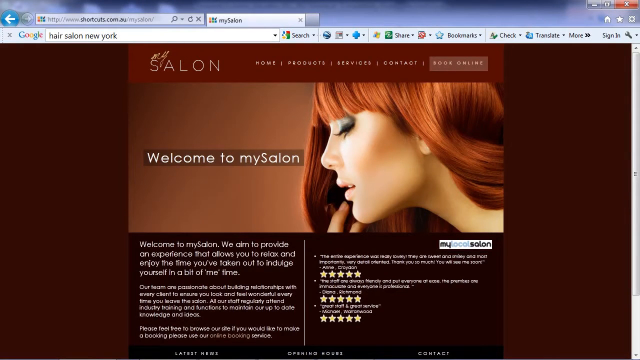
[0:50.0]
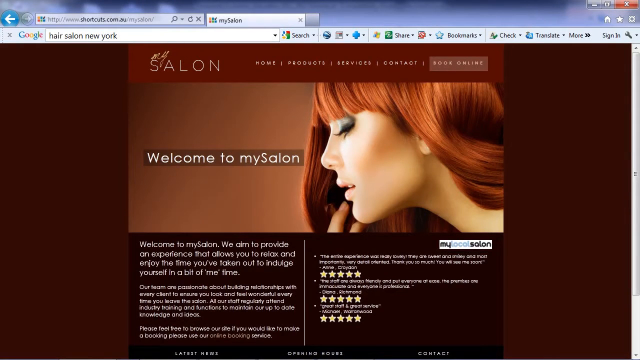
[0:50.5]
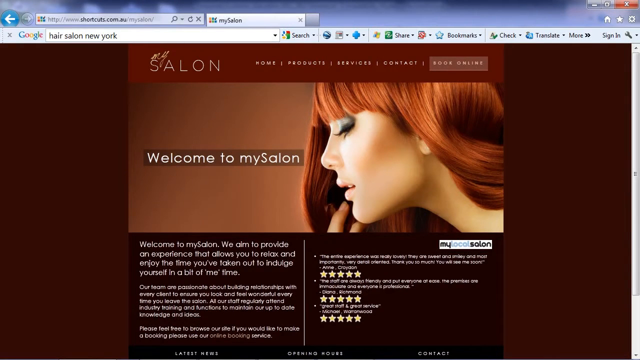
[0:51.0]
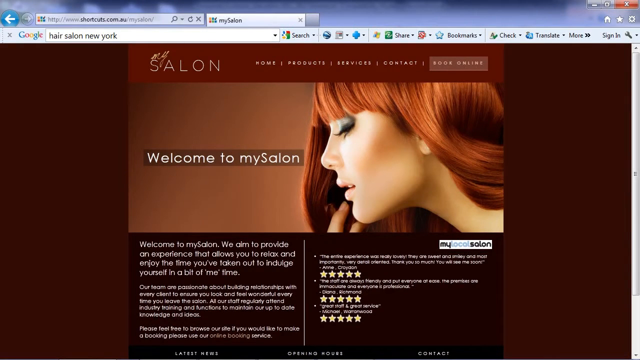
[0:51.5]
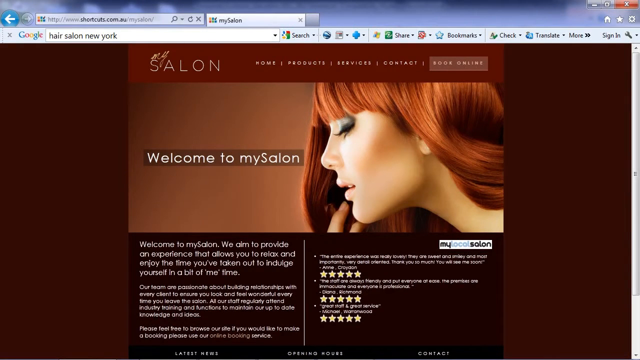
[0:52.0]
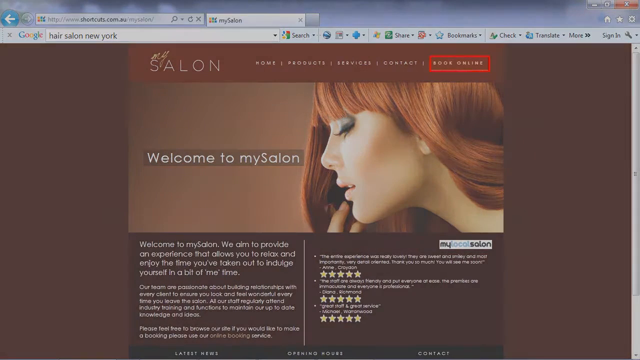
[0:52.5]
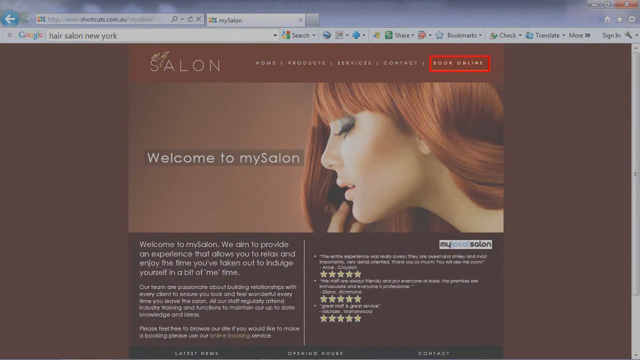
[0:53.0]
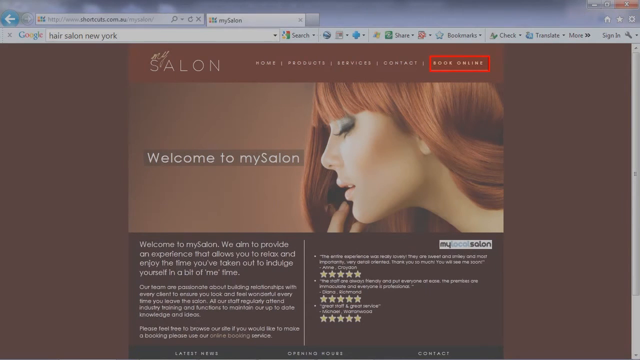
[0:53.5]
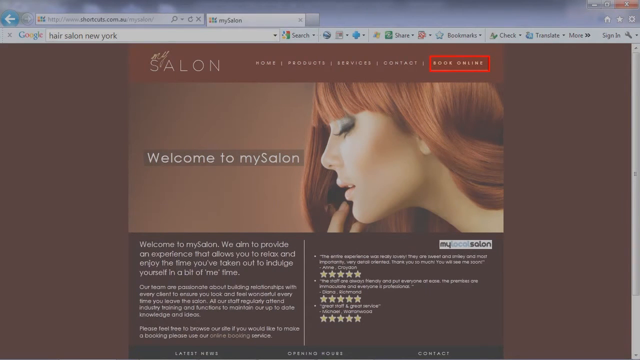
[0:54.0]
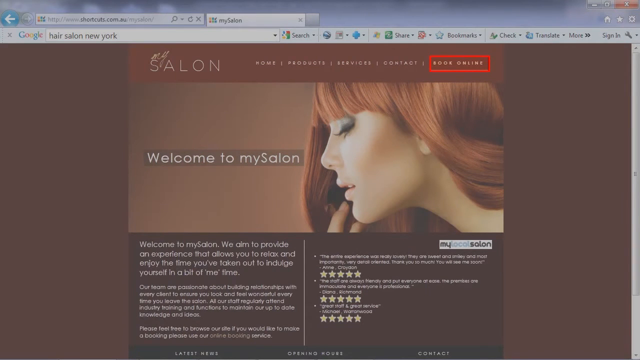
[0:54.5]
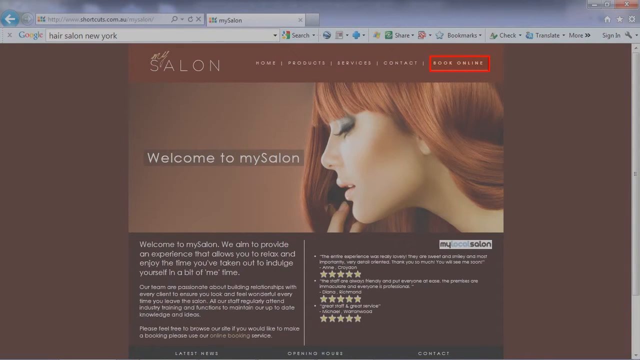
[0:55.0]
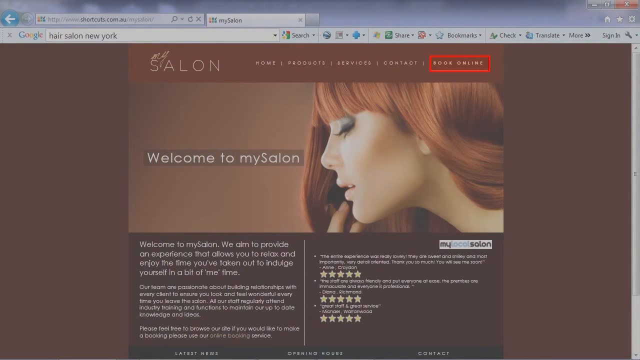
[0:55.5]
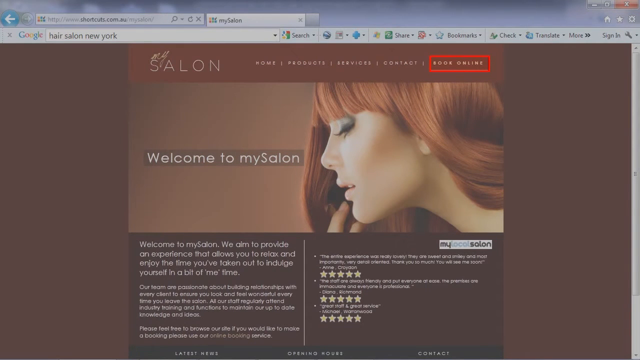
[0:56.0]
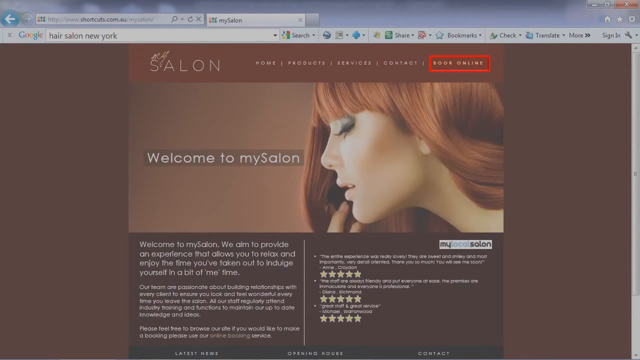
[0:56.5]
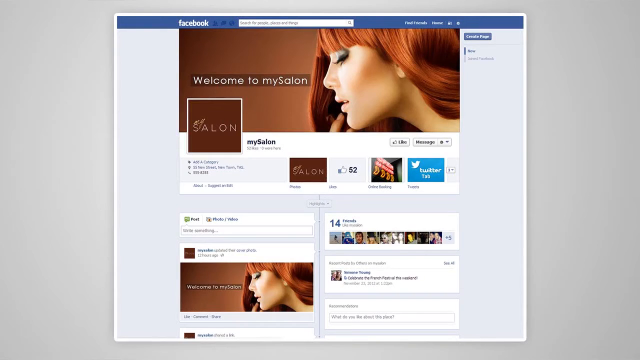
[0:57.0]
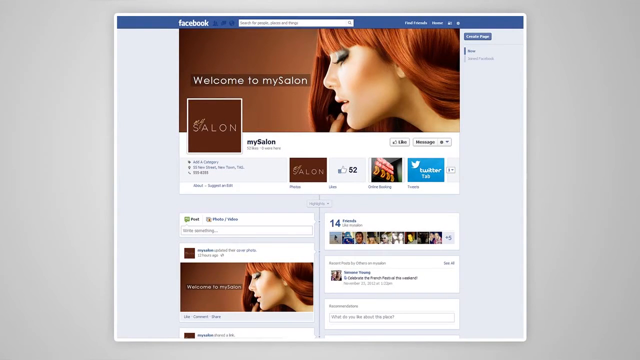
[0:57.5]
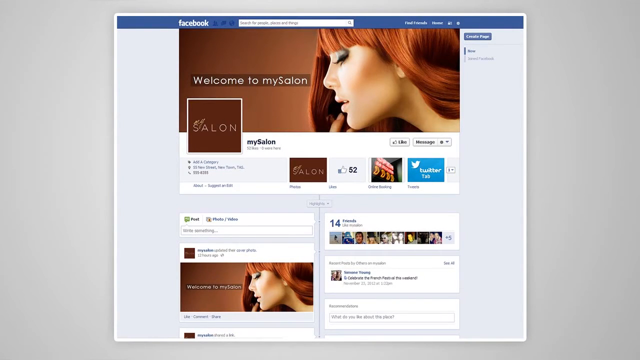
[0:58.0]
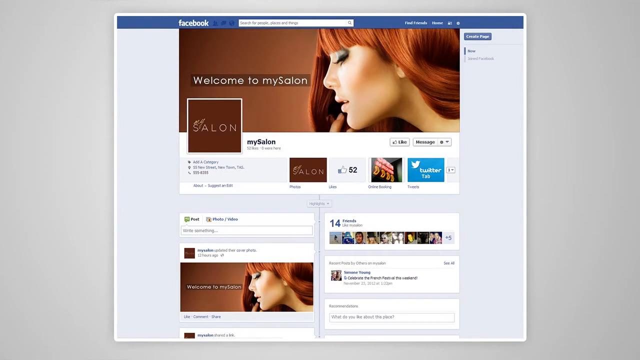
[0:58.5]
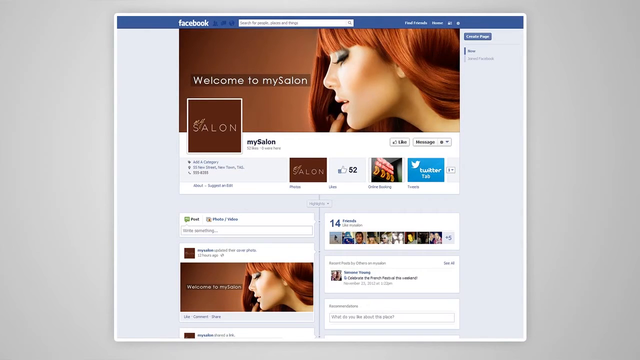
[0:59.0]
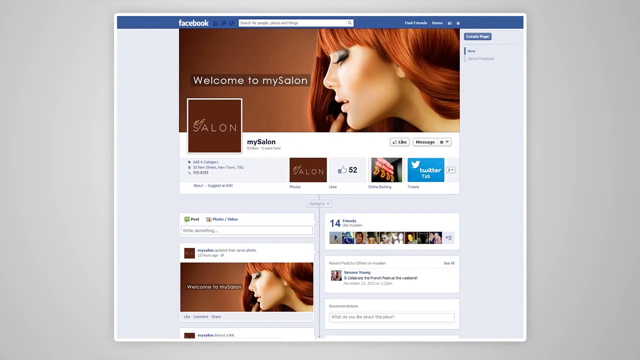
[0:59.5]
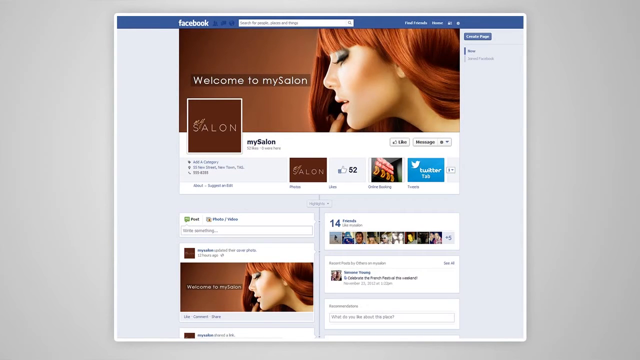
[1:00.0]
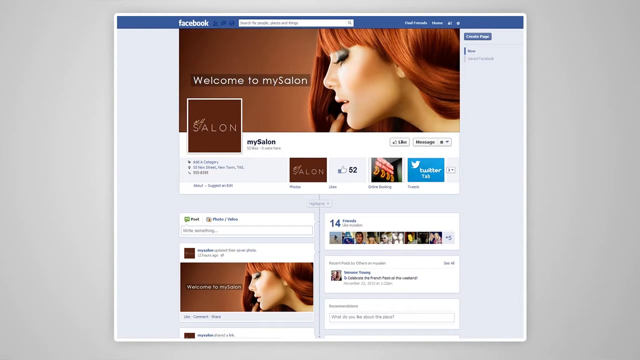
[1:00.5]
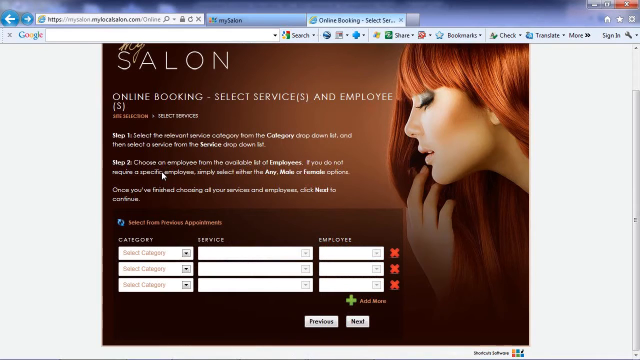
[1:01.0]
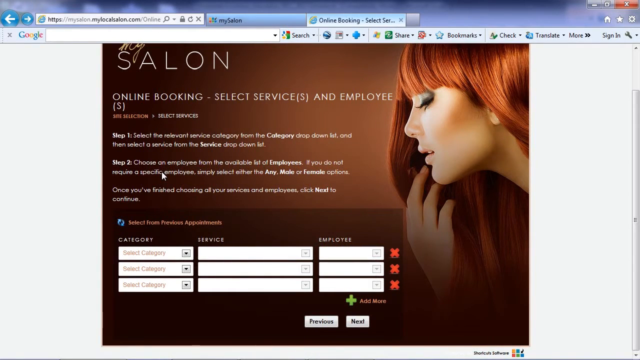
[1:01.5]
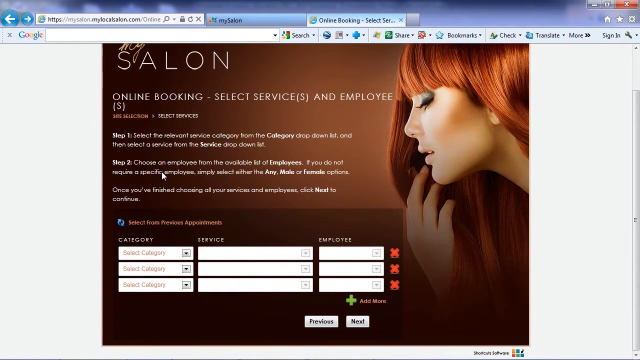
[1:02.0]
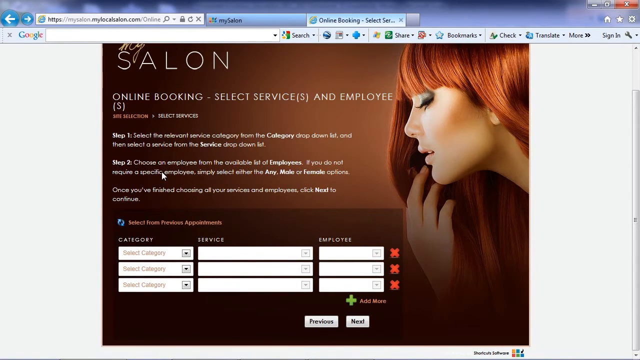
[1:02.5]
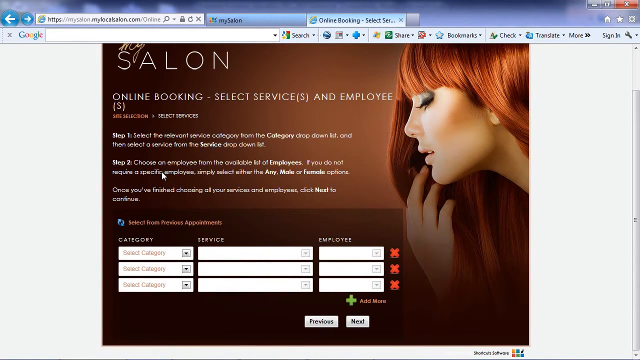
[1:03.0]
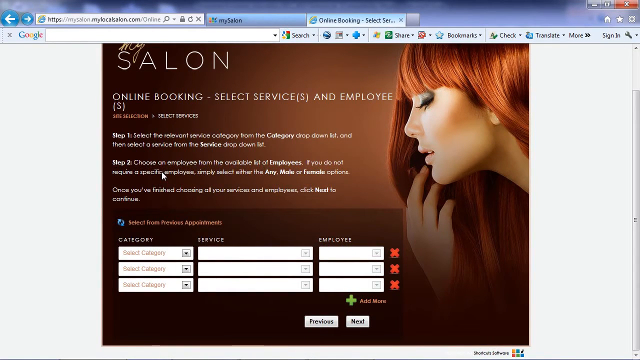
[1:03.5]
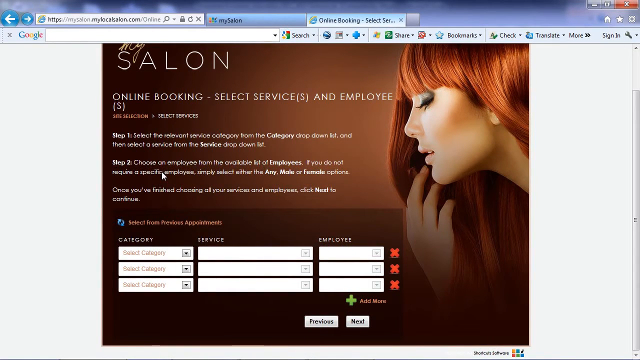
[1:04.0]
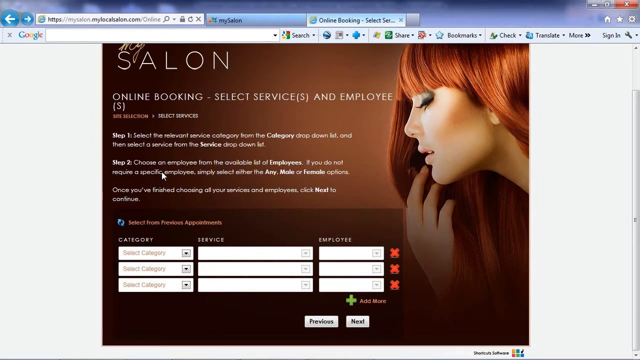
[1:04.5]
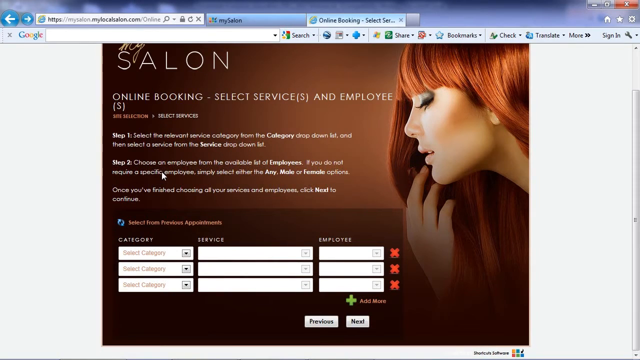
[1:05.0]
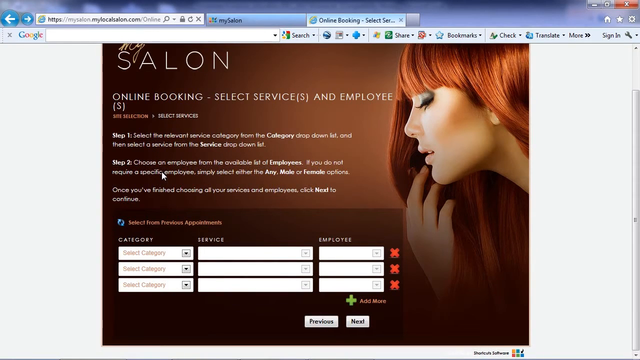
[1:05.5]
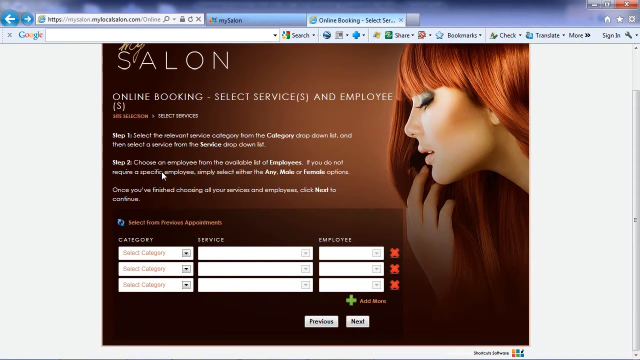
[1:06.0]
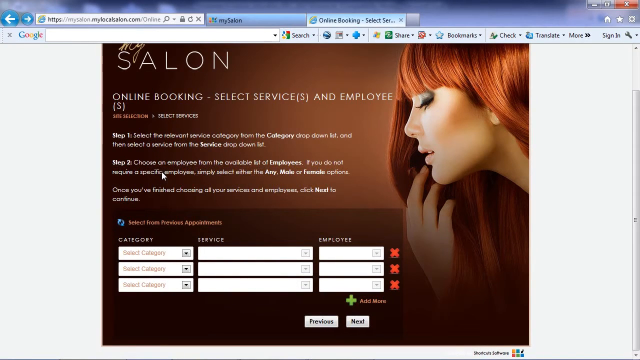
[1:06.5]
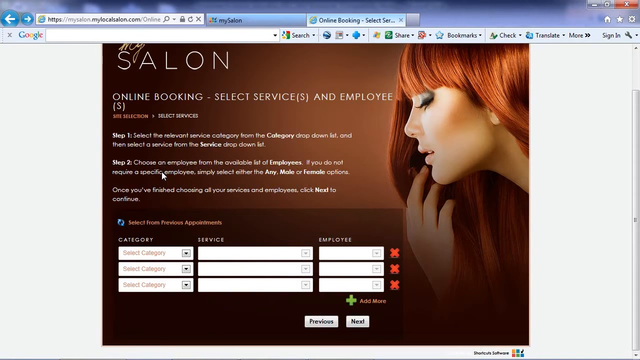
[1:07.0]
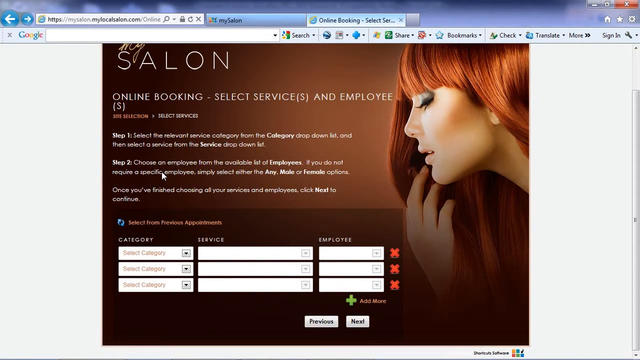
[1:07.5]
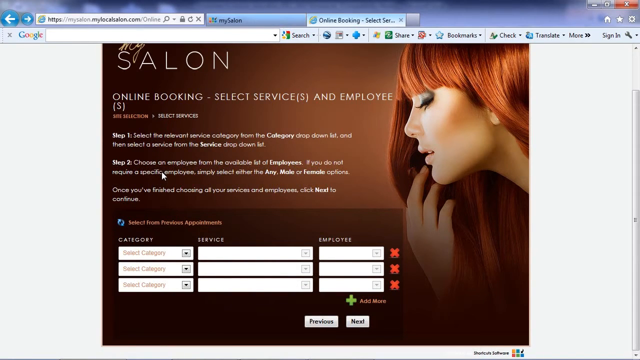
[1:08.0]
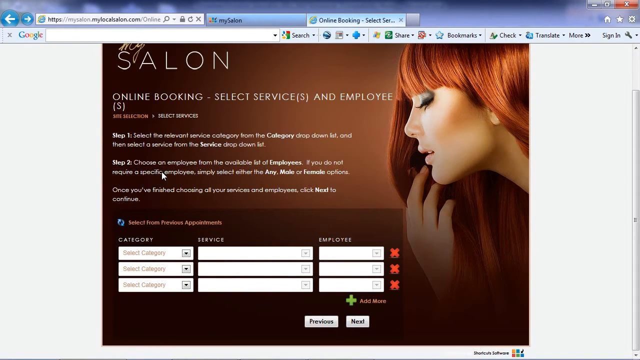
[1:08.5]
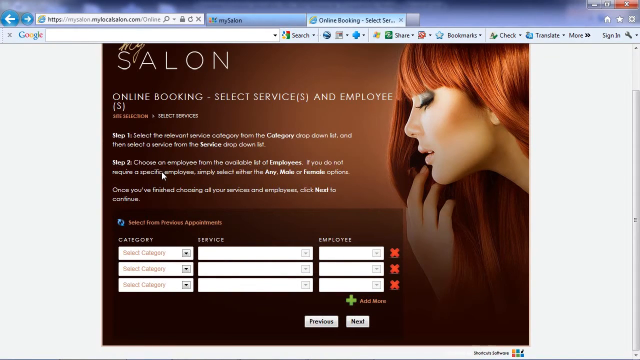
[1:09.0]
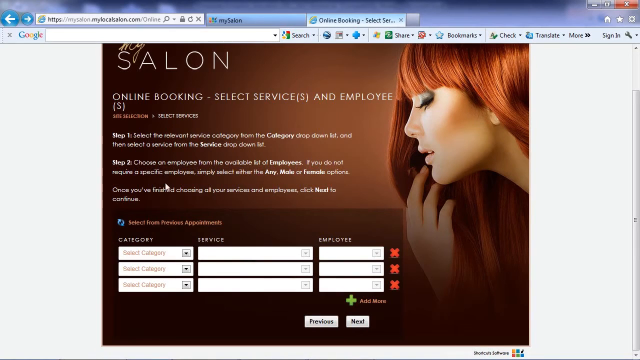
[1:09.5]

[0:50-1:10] The text reads "salon" and "welcome to my salon," showing that the logo and design belong to someone's business and website. The page looks like a Facebook or Twitter page, though which one is unclear.